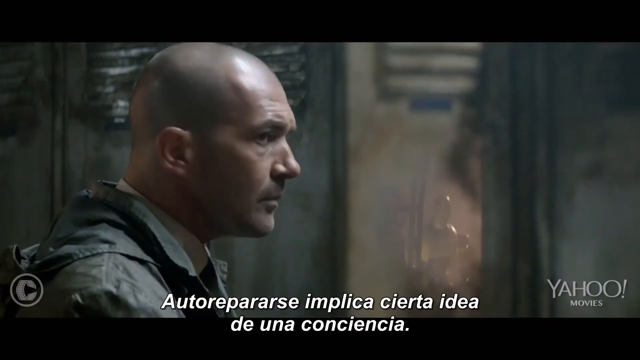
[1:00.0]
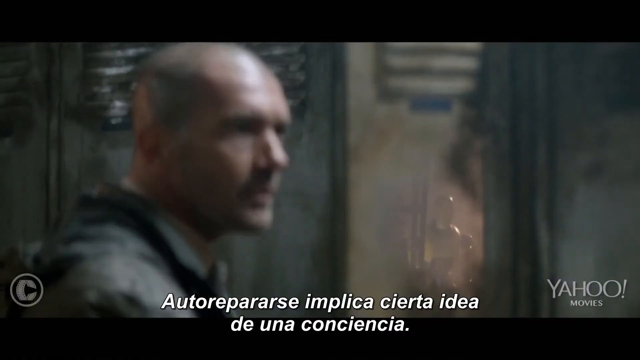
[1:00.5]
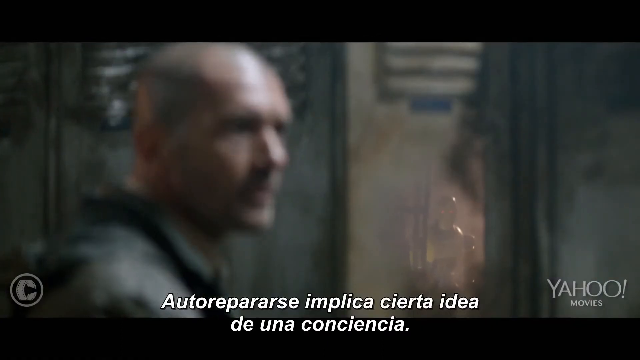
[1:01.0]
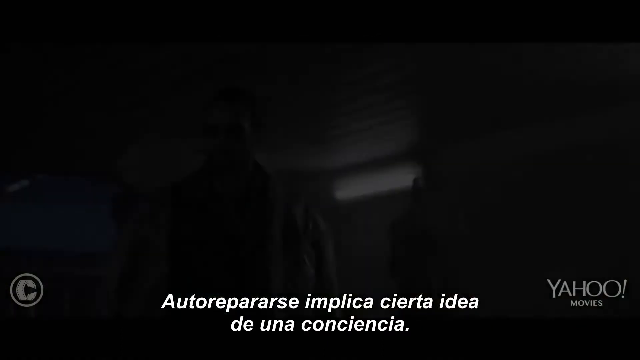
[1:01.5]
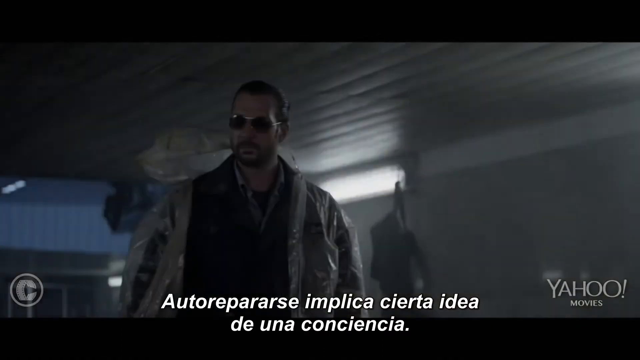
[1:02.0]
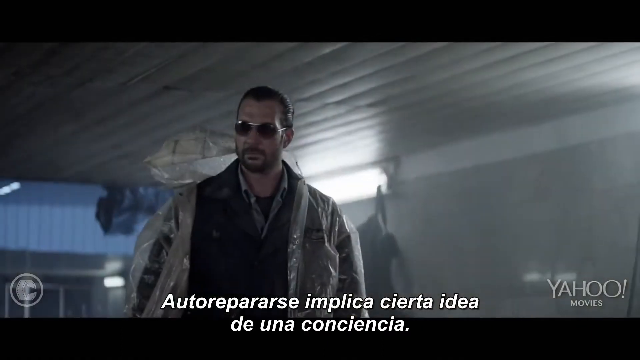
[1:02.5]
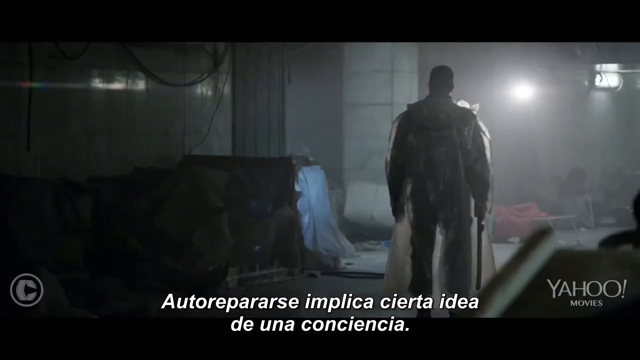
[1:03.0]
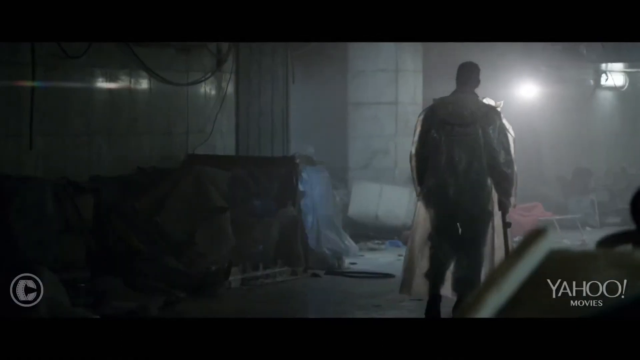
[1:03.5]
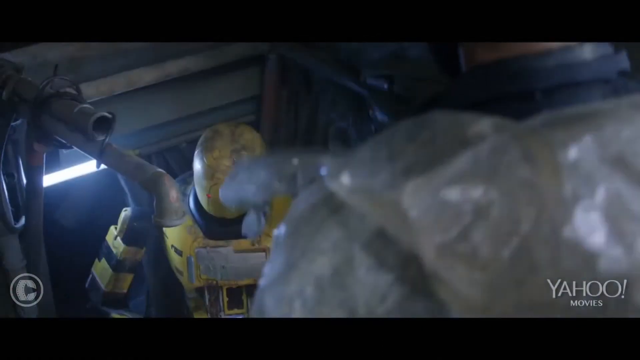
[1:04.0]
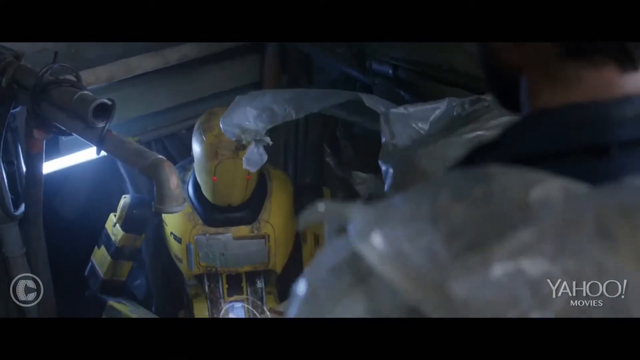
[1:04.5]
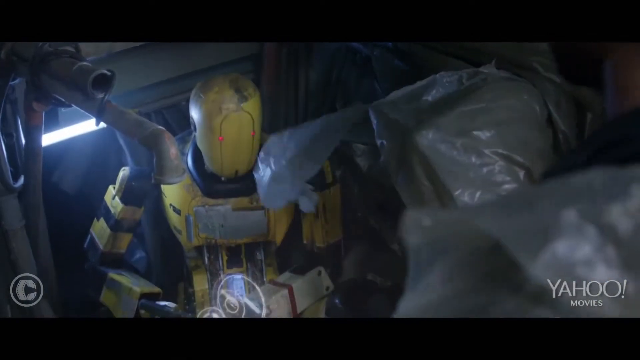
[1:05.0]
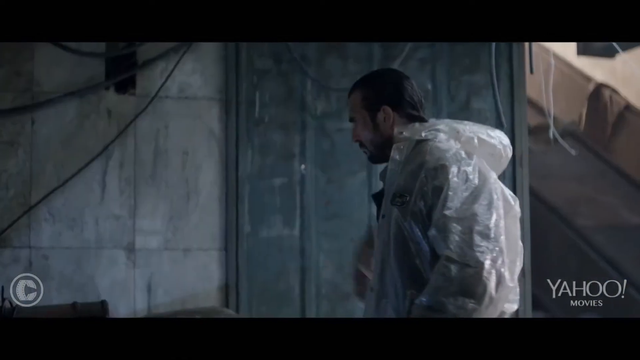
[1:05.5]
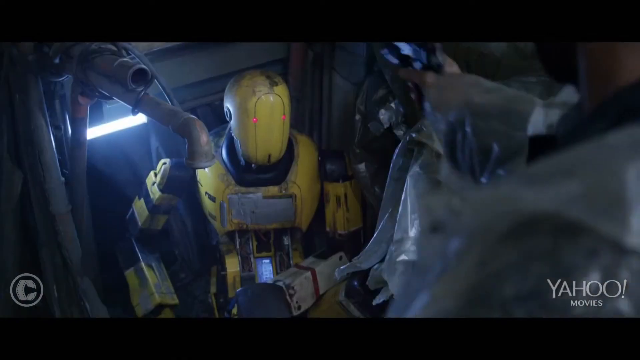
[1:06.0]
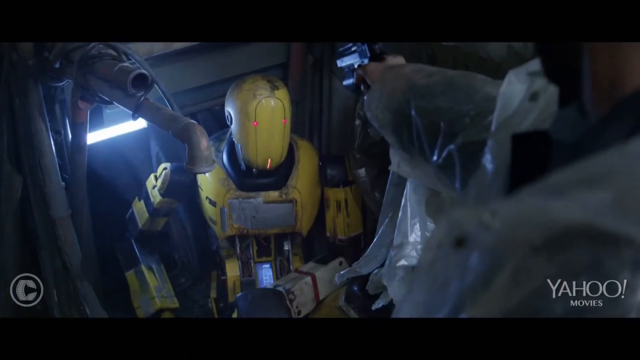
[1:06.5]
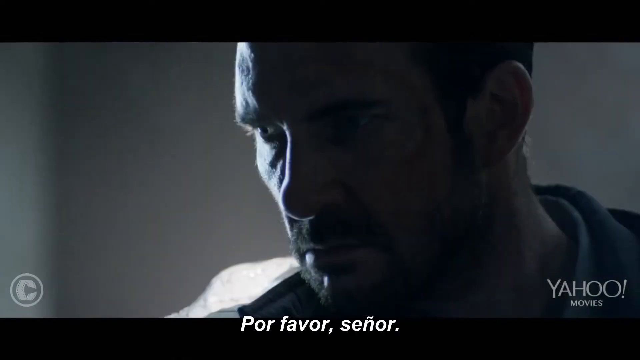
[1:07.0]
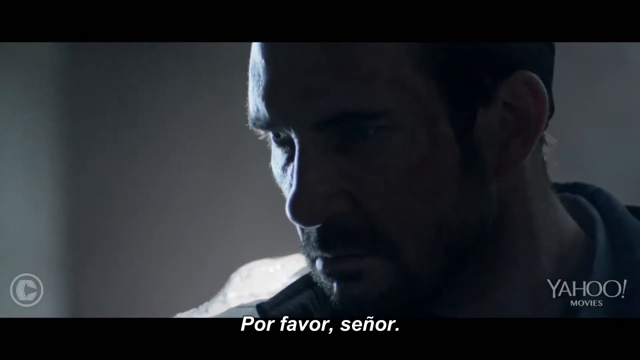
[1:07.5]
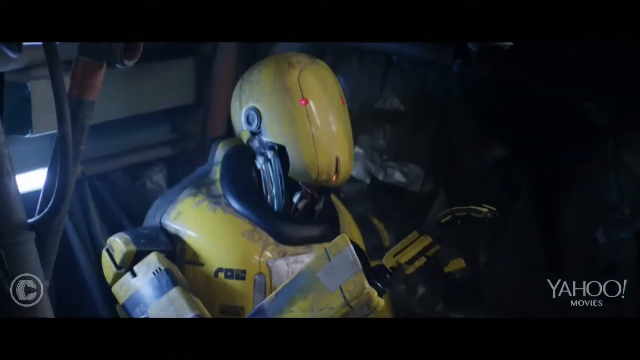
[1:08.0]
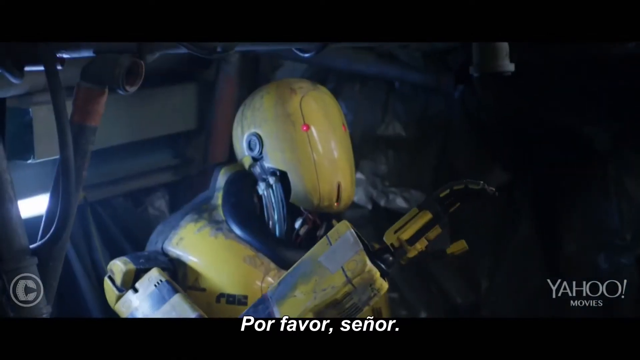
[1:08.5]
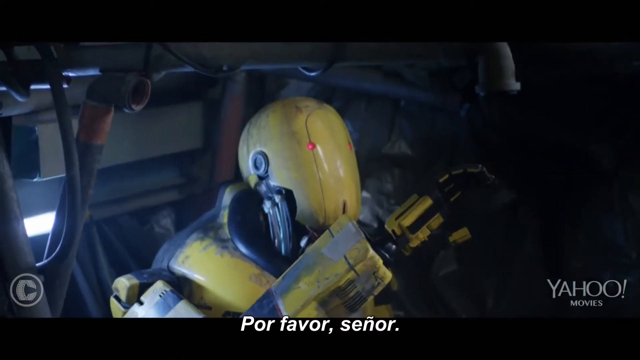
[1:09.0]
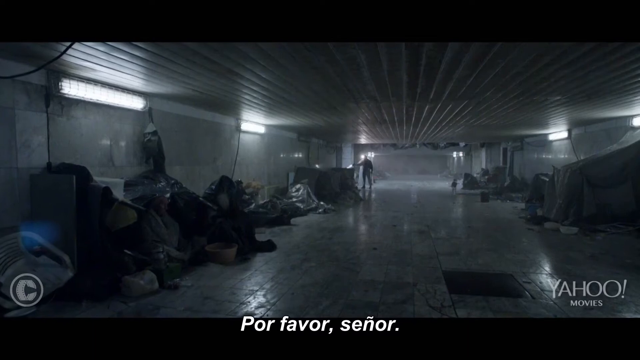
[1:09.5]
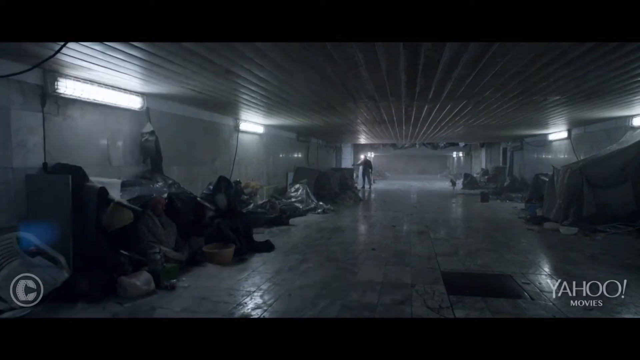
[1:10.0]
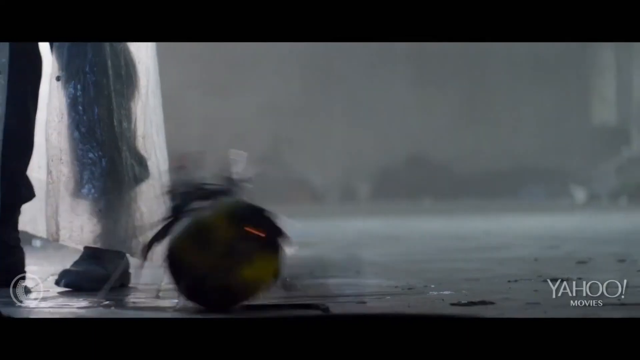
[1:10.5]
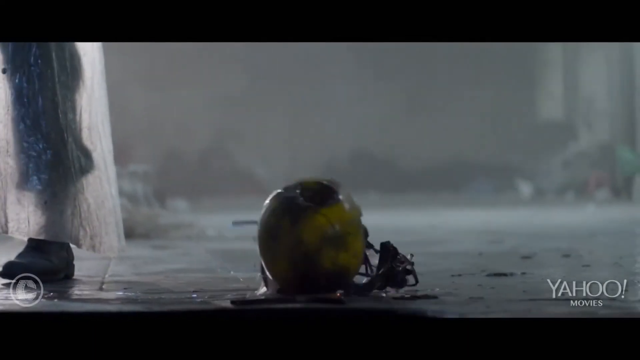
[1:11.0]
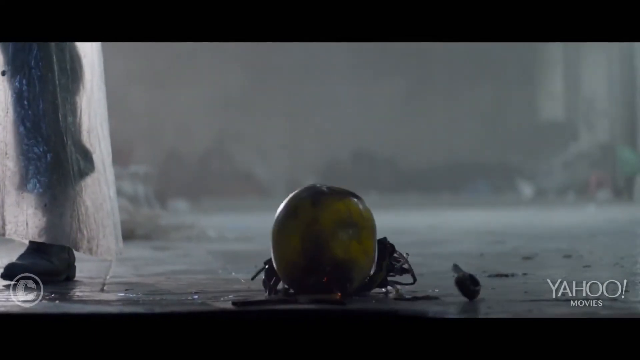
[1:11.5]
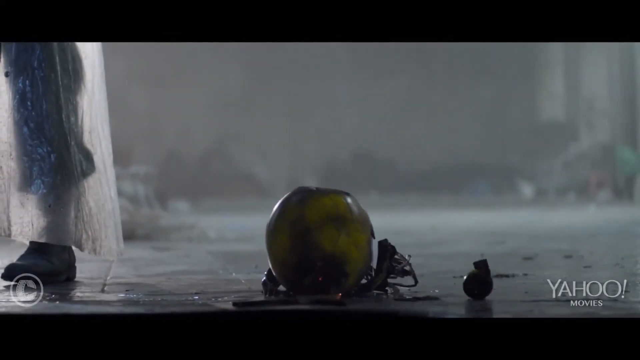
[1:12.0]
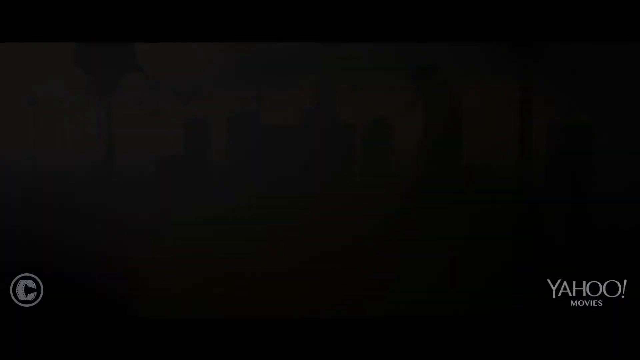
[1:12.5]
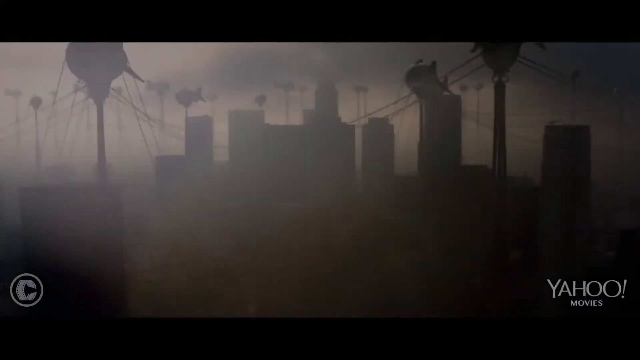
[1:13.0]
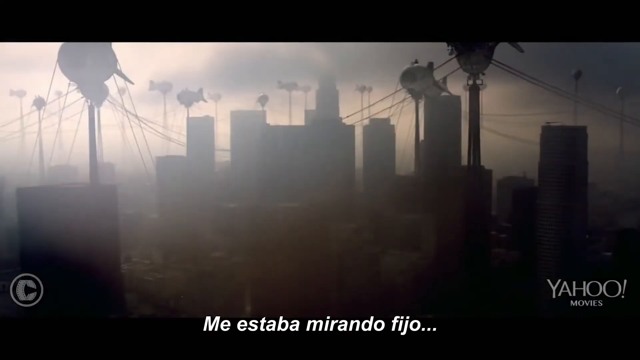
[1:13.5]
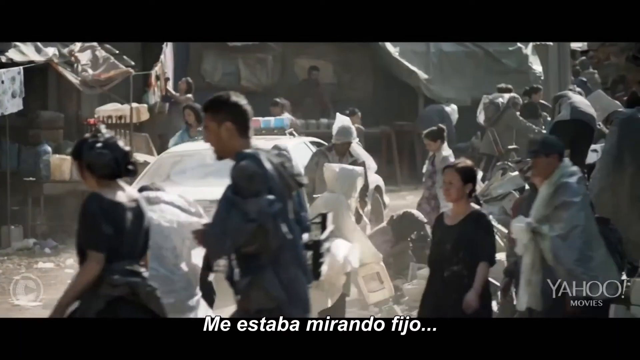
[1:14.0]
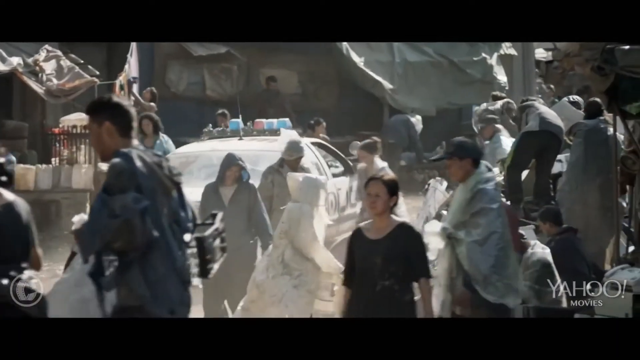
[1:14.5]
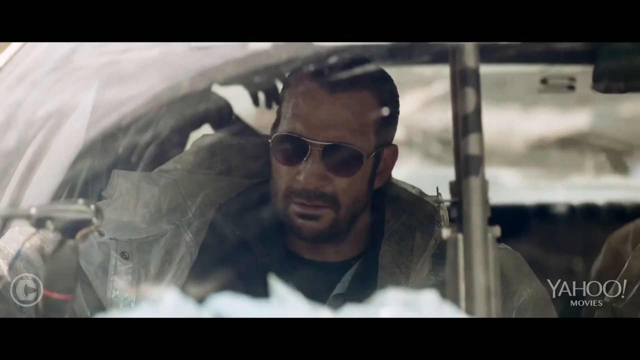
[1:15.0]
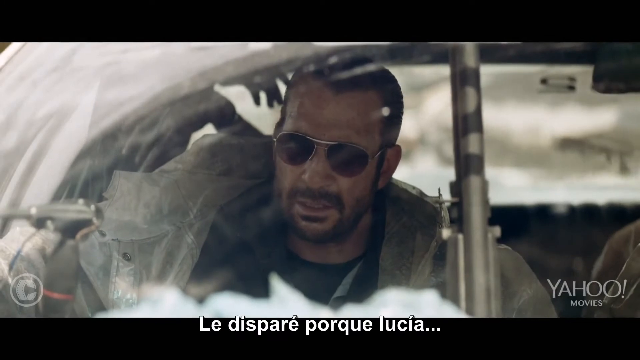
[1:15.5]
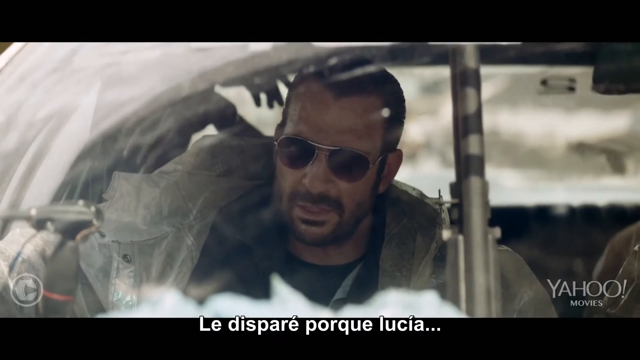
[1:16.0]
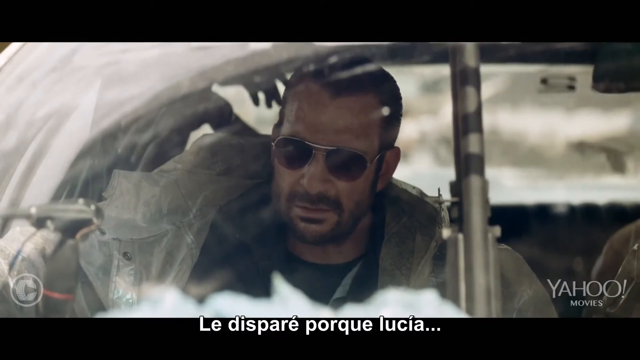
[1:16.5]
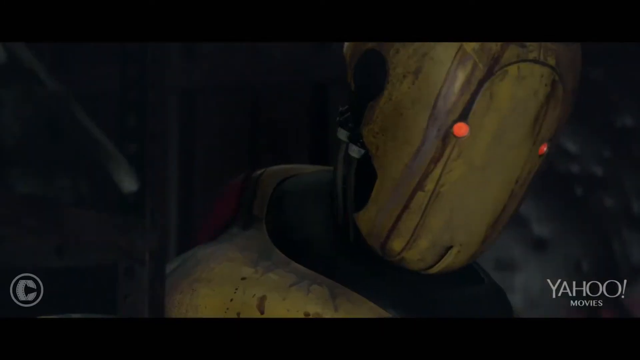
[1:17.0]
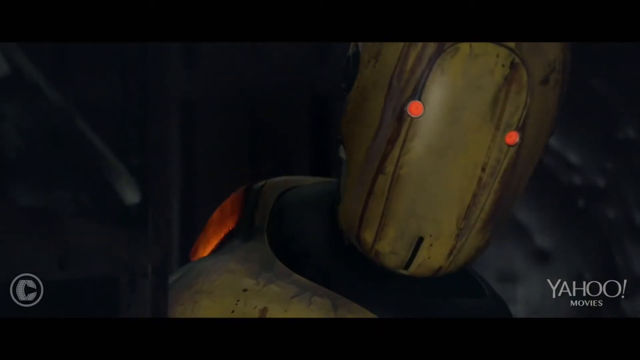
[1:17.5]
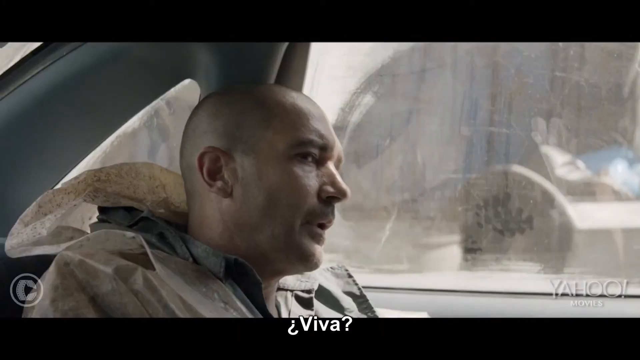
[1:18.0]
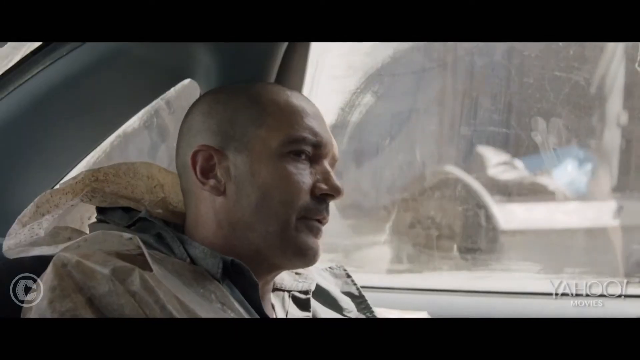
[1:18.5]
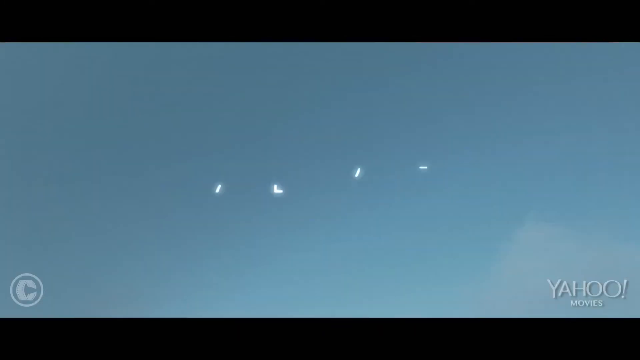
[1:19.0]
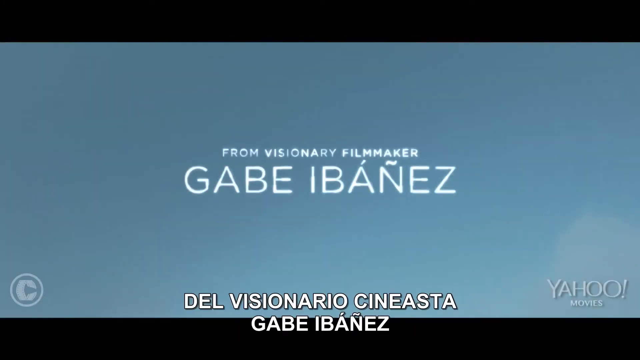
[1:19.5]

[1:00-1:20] A man with a dead face heads toward a different place and turns around at a mirror. A different character looks at him and interacts with a robot that looks a little beat up, no longer as white and chrome as before but more worn down. Another man pulls a gun on the robot and looks about to shoot; the robot seems to beg for mercy, putting its hand up, but the man shoots it and its head falls off its body and rolls away. The man then describes his reasons for shooting the robot, saying that it seemed alive.